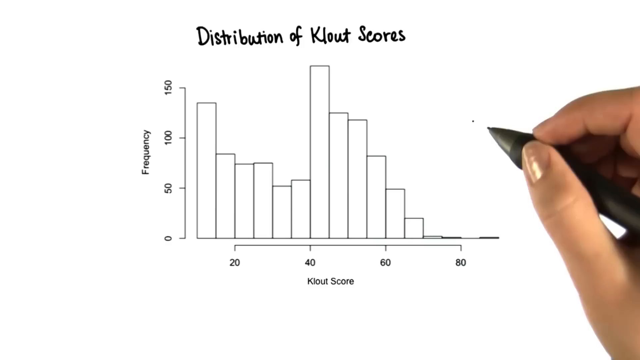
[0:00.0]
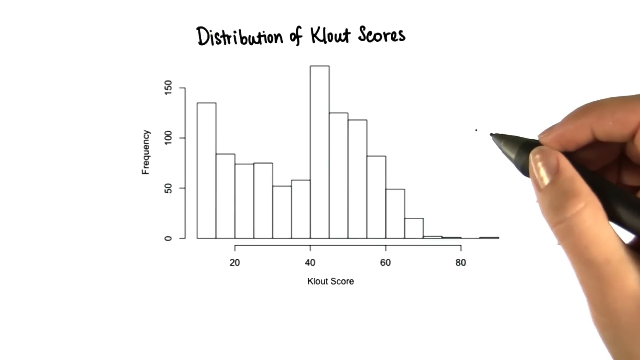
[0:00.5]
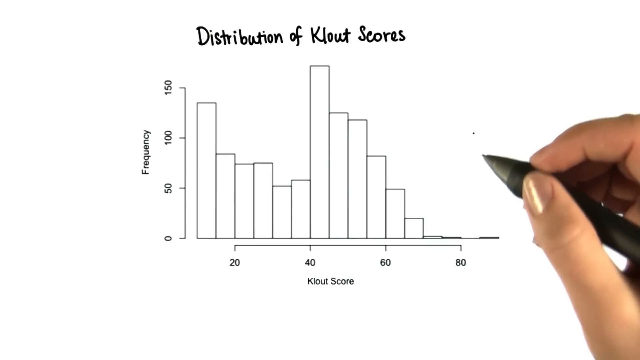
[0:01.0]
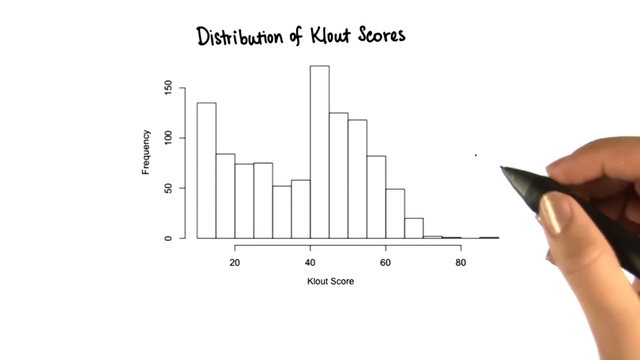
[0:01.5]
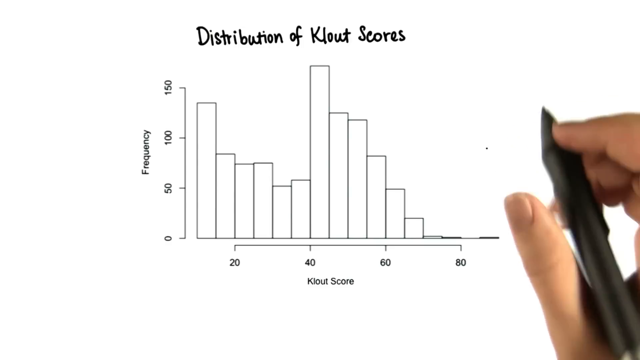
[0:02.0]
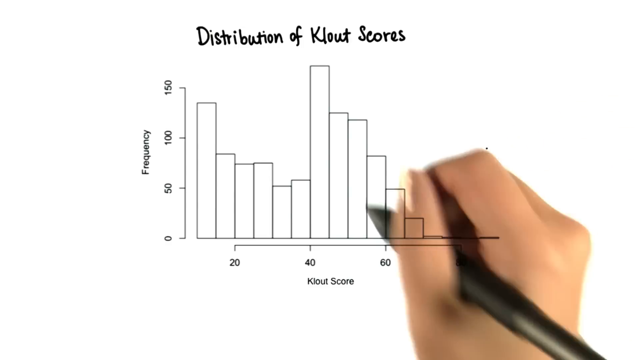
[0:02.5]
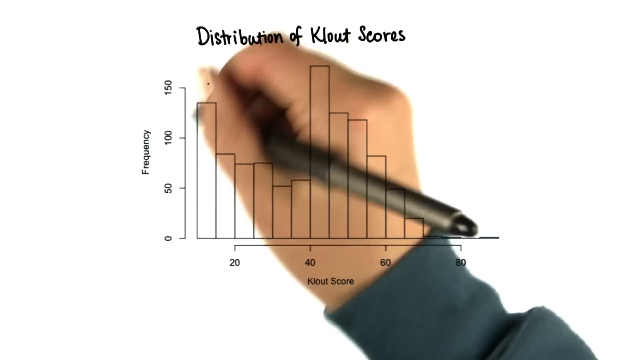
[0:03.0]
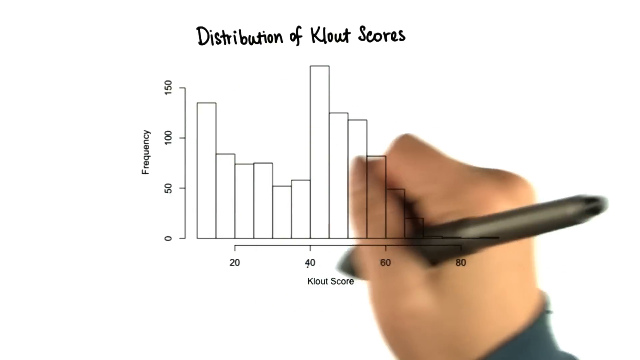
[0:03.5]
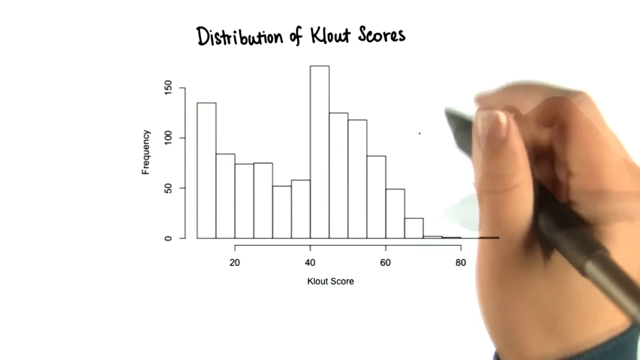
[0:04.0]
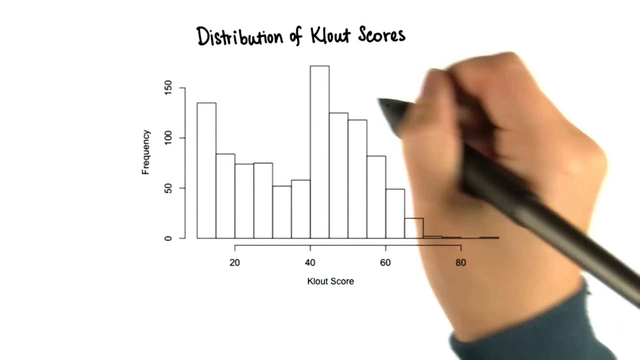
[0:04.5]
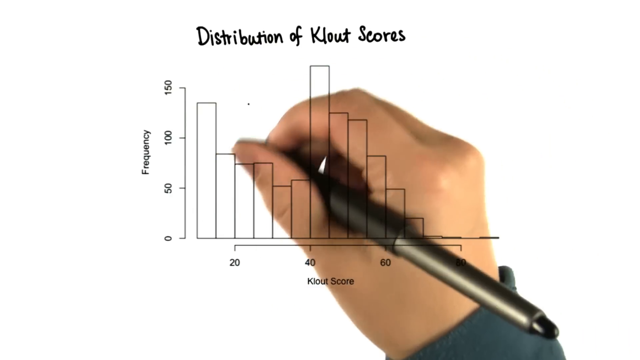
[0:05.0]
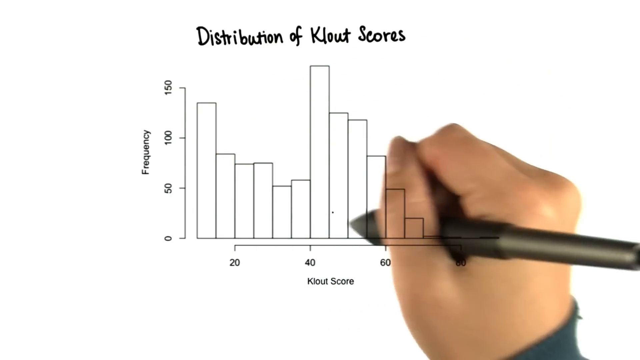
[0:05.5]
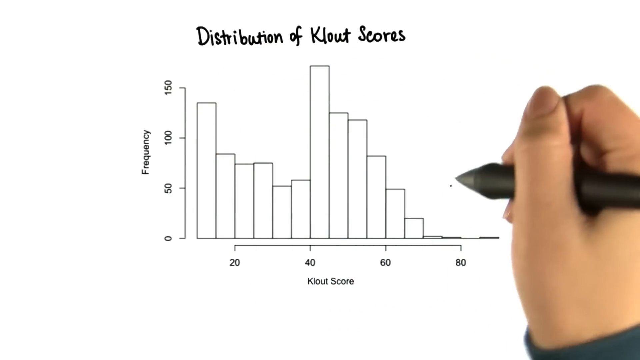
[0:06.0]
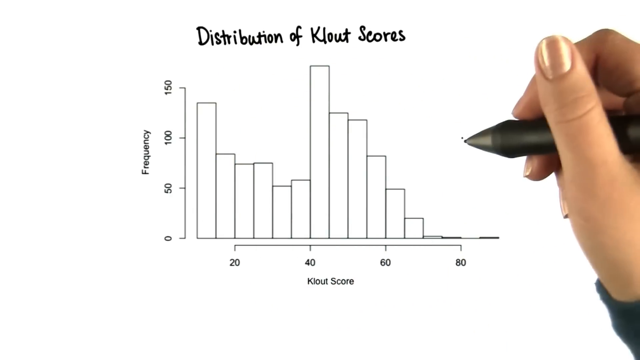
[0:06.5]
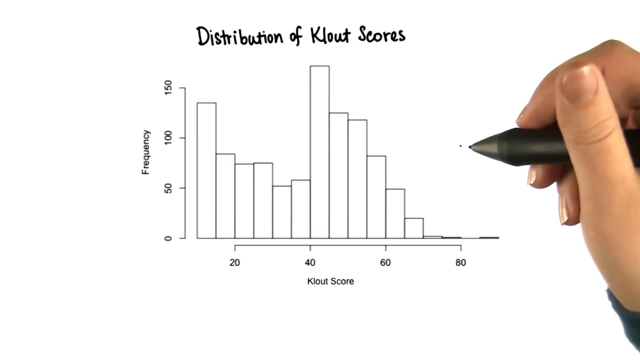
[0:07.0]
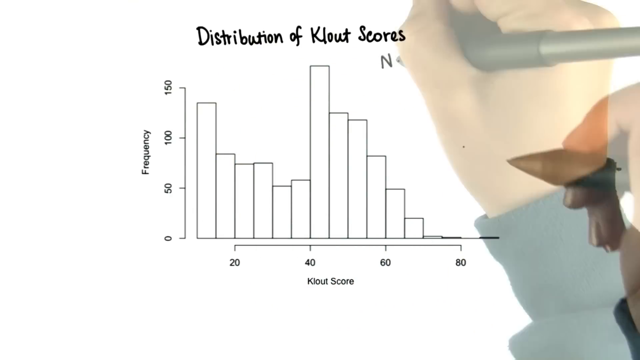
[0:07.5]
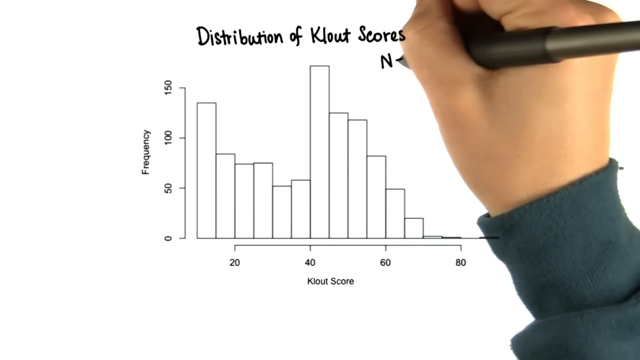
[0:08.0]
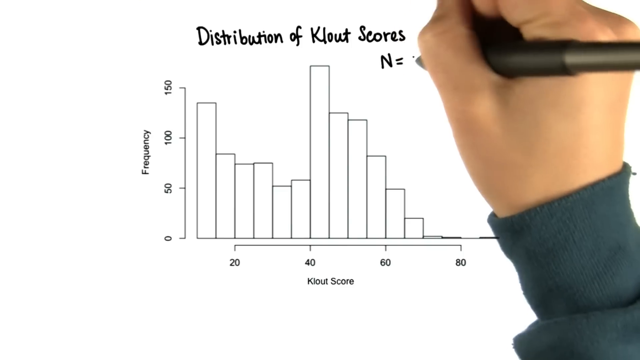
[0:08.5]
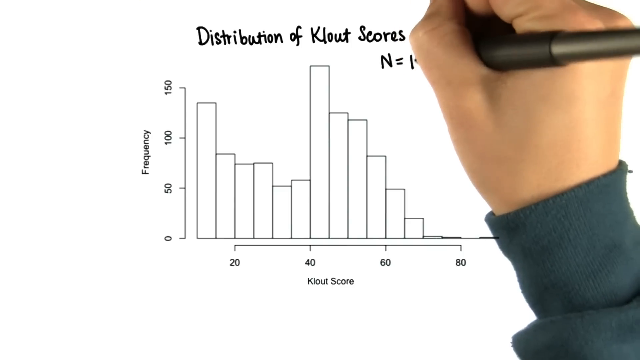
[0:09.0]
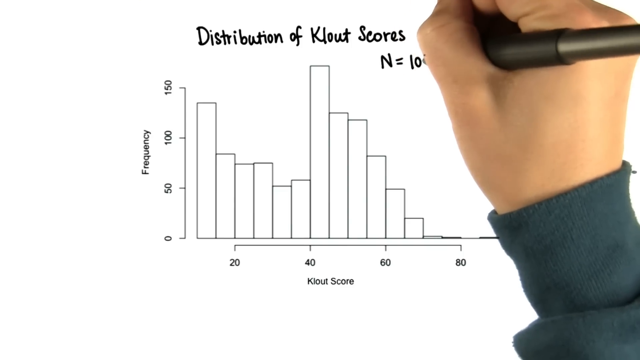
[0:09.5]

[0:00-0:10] The video opens on a white background that gradates from gray to black at the very bottom. In the center, in bold black letters, is the title "distribution of clout scores," and below it in the center is a graph. The vertical axis is labeled "frequency" and runs from 0 to 150 in steps of 50; the horizontal axis is labeled "clout score" and runs from 20 to 80 in steps of 20. Vertical bars of different heights rise from it: some reach 150, some go past 150, and some stay all the way down at the bottom. To the right is a hand that looks female, holding some kind of pencil or writing utensil. The hand moves around the screen, goes behind the graph, and keeps moving before starting to write, in the same big bold black letters as the title, "n =", where the writing stops.